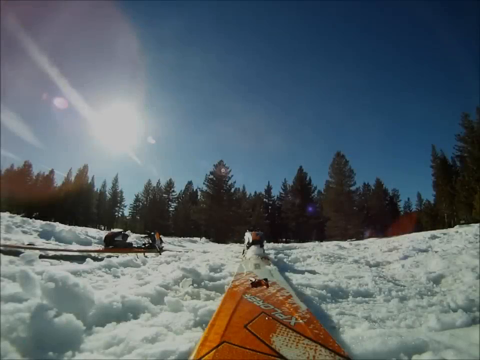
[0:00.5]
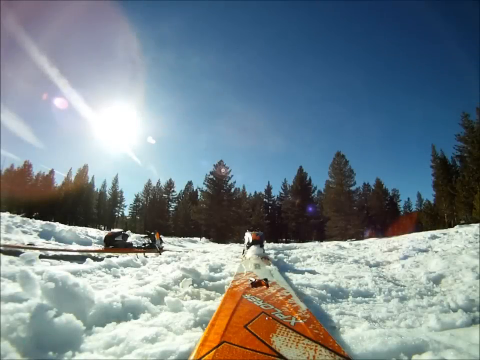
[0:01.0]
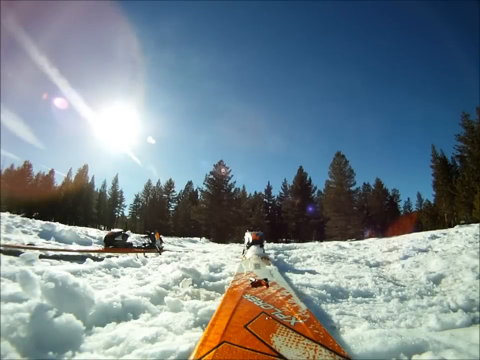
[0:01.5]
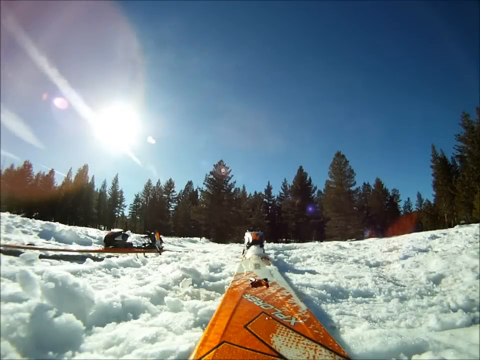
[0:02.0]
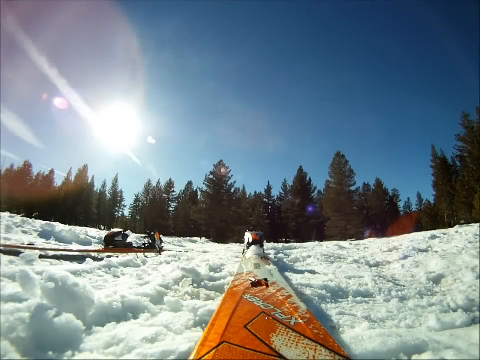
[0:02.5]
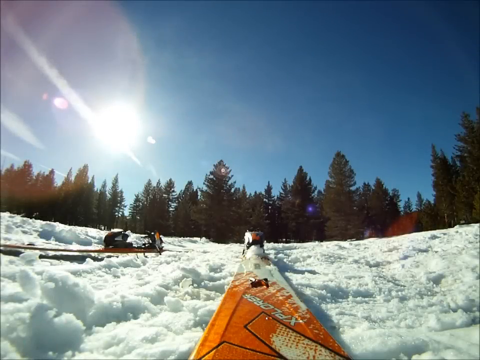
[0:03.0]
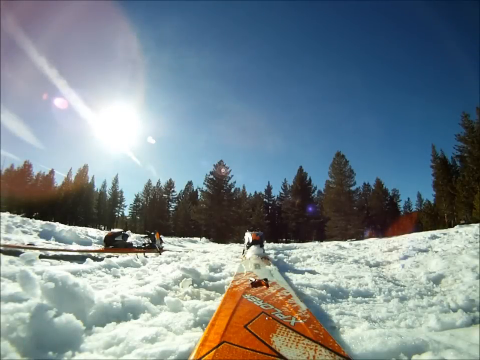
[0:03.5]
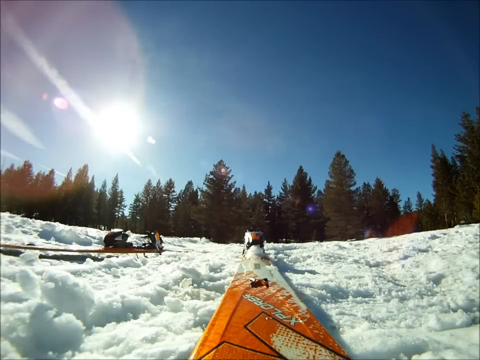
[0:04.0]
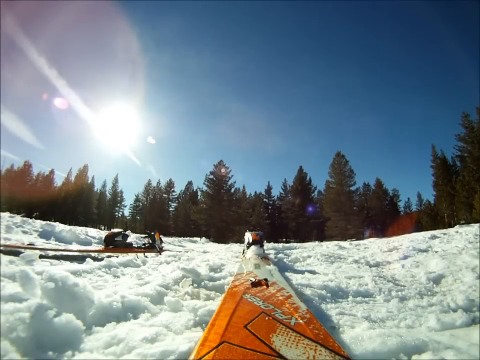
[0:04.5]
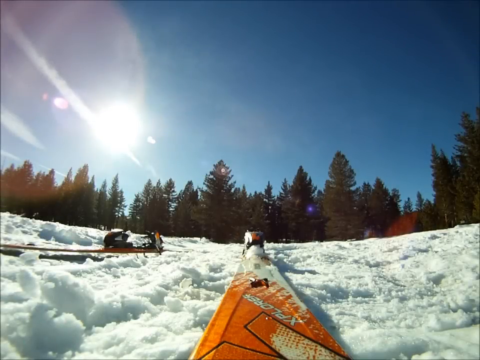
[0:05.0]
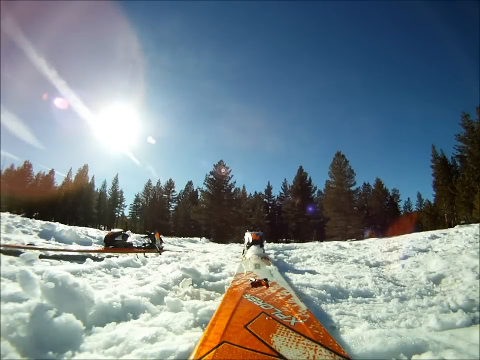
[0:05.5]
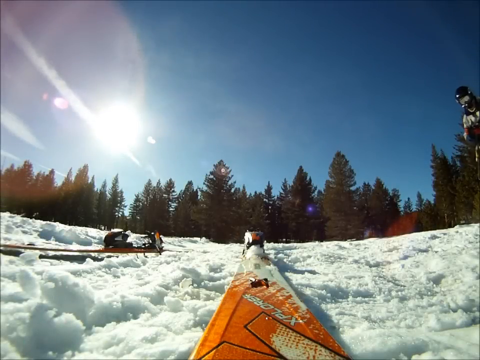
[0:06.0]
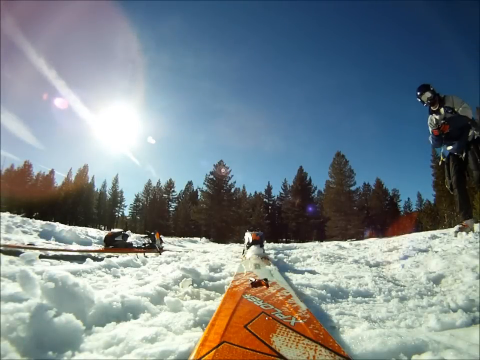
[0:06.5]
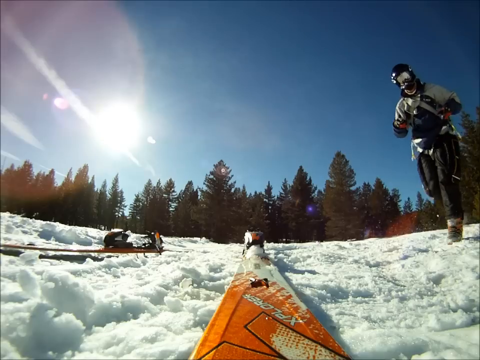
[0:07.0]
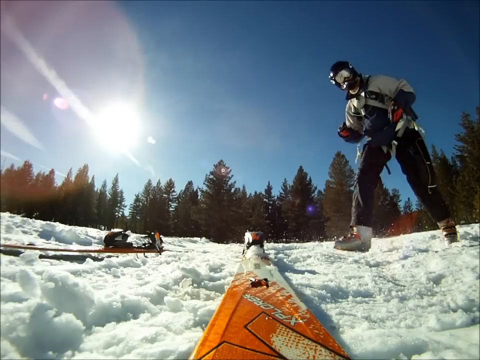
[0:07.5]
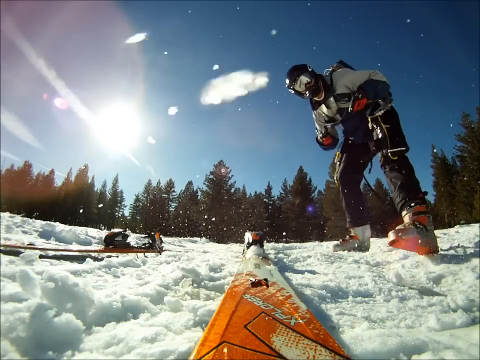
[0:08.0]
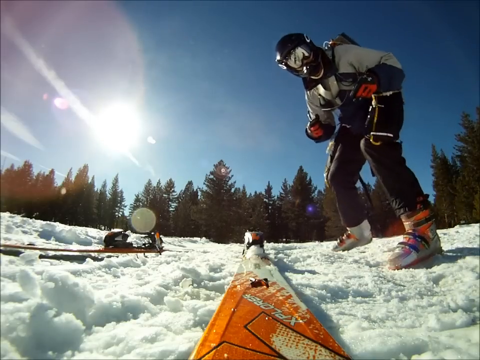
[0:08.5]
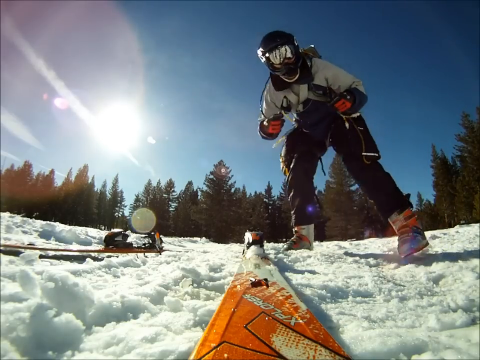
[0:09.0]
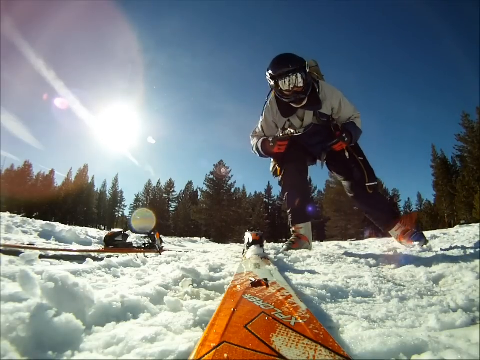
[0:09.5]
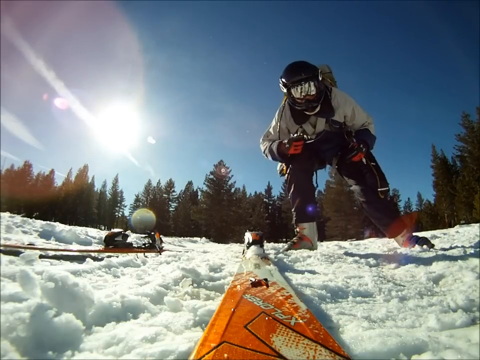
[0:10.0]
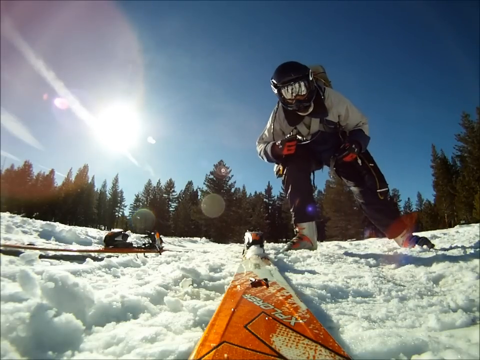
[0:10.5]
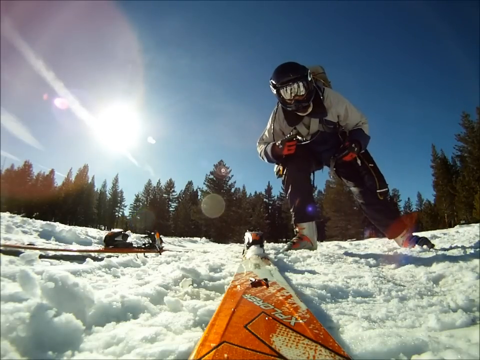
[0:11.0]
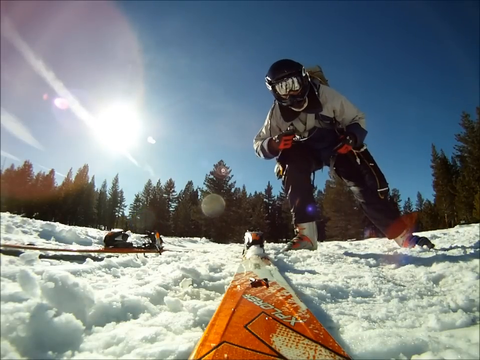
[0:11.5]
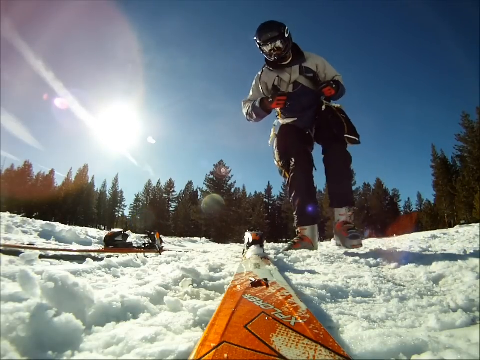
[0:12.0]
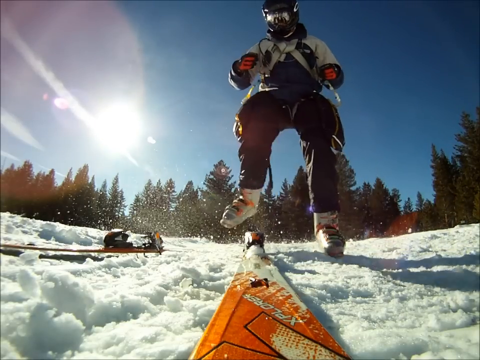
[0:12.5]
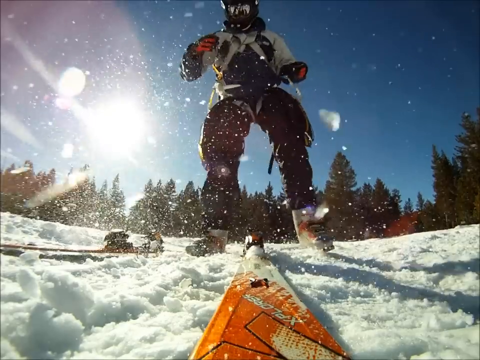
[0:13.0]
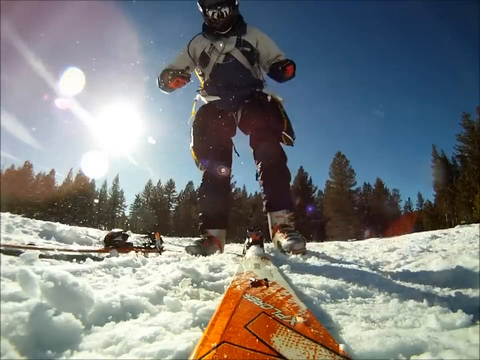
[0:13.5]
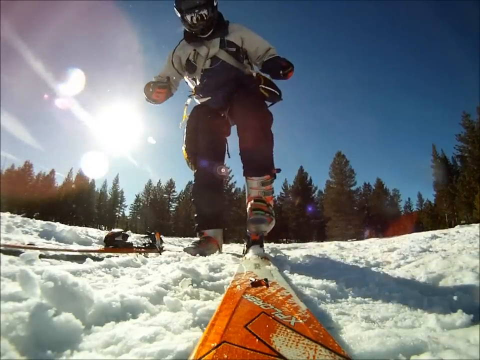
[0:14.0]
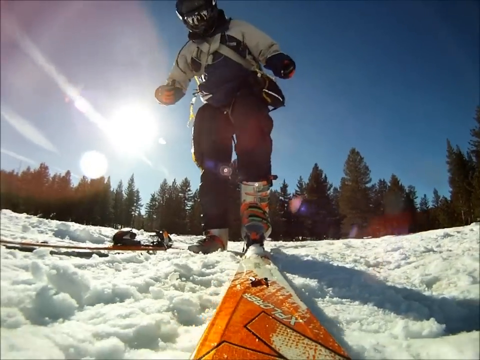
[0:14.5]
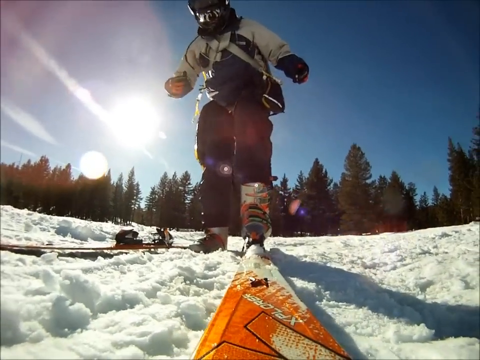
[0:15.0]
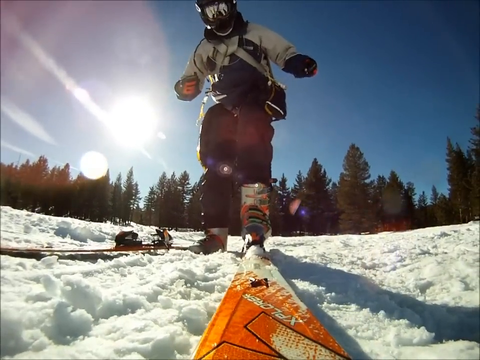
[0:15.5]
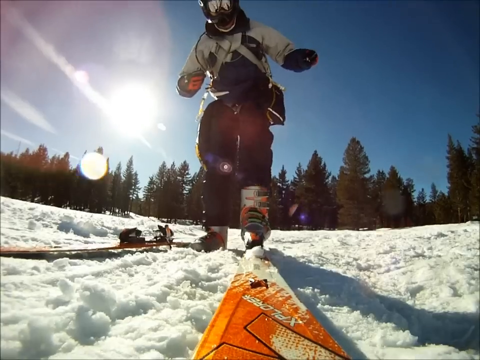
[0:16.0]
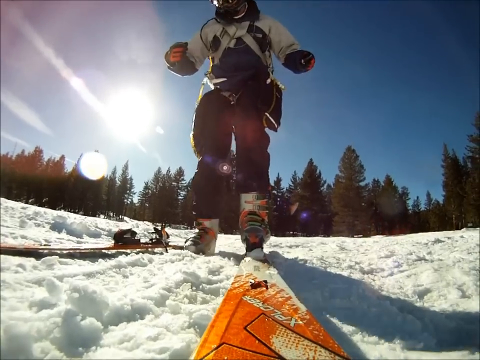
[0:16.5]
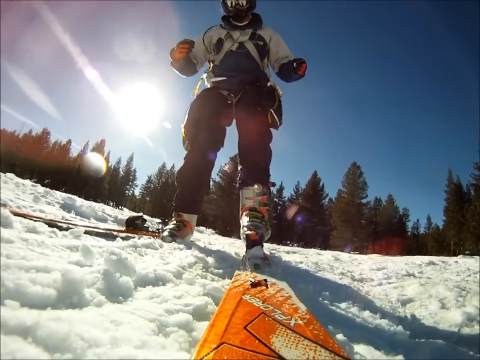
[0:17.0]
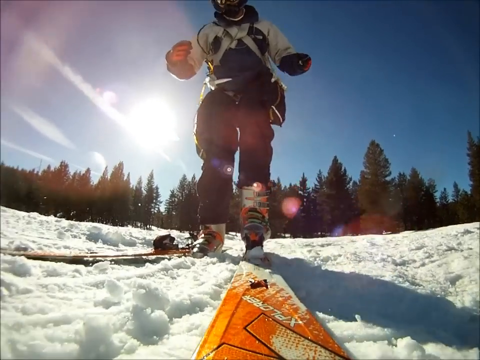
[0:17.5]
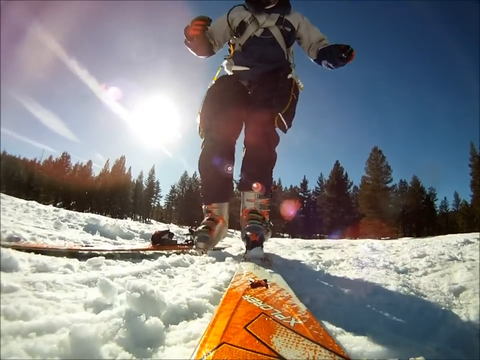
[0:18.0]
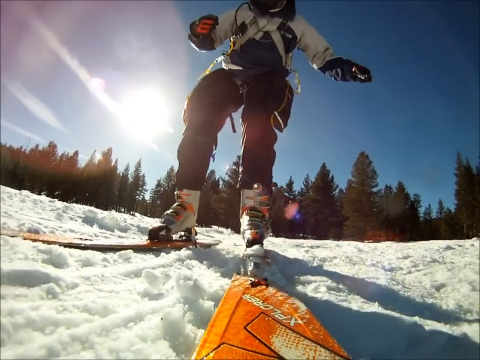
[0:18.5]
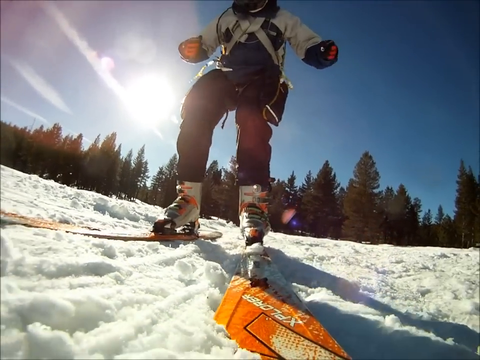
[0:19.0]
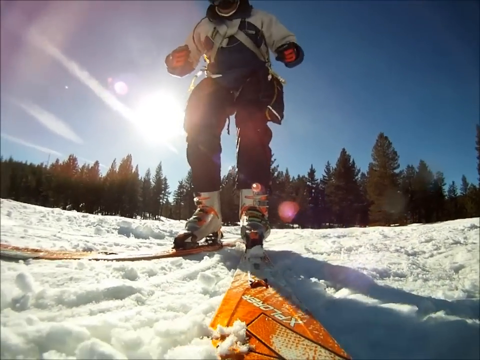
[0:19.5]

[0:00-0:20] A forest appears in the background under a blue sky and clear sun, and a pair of skis is on the snow-covered ground in the foreground. Someone walks into frame and steps into one ski and then the other. The person has a helmet on and wears ski pants that come up very high, apparently with shoulder straps. He gets into the skis.